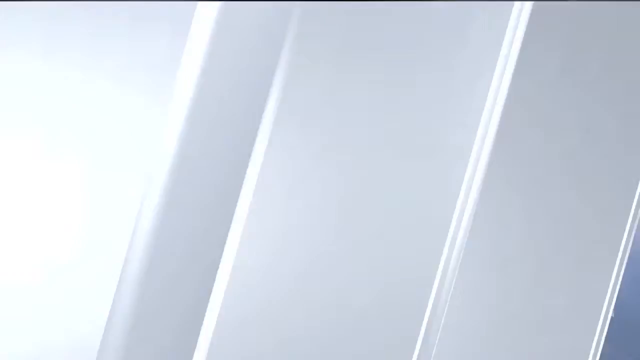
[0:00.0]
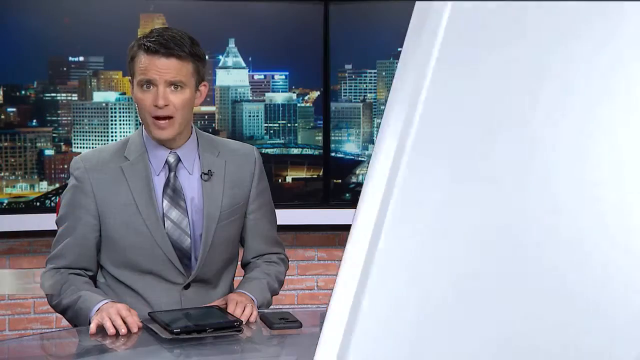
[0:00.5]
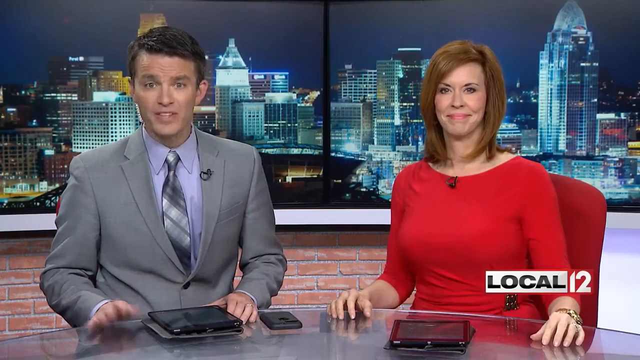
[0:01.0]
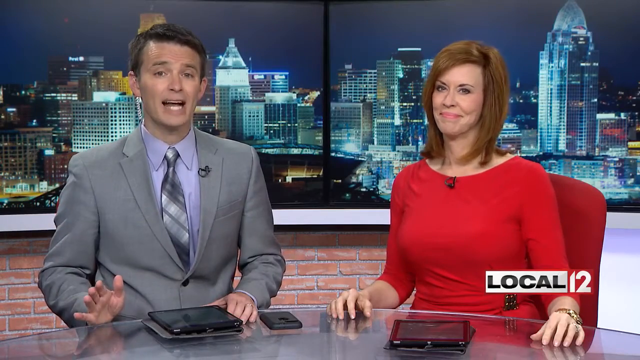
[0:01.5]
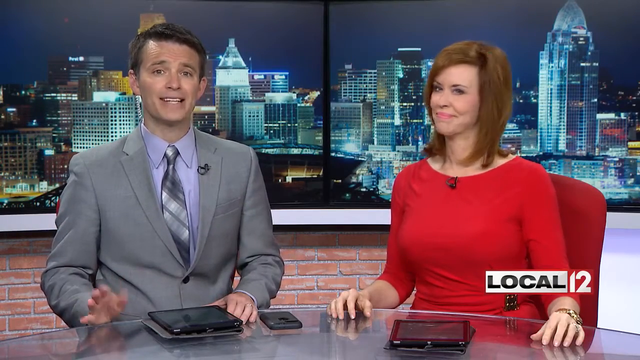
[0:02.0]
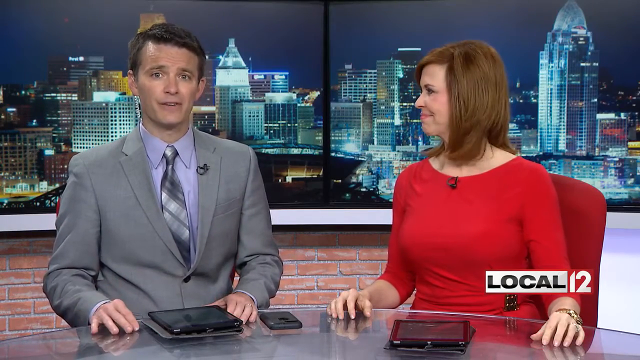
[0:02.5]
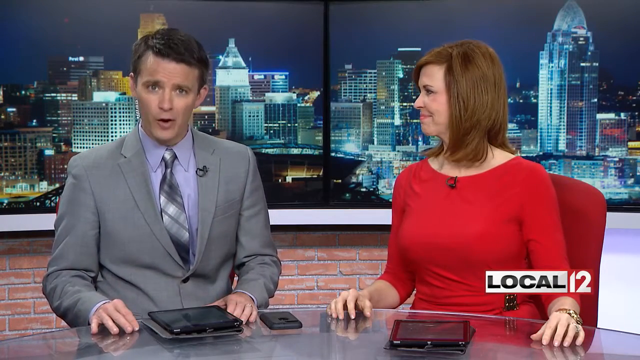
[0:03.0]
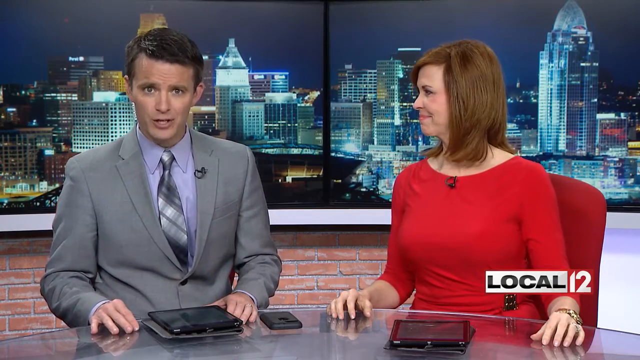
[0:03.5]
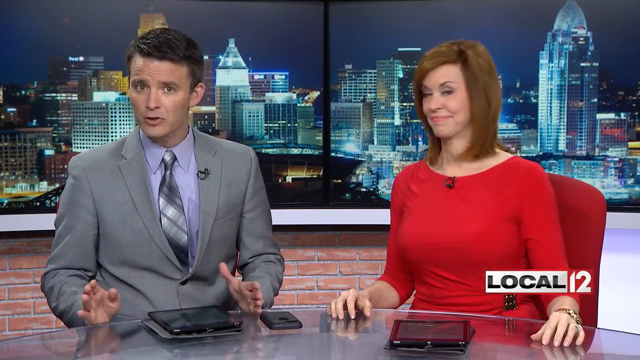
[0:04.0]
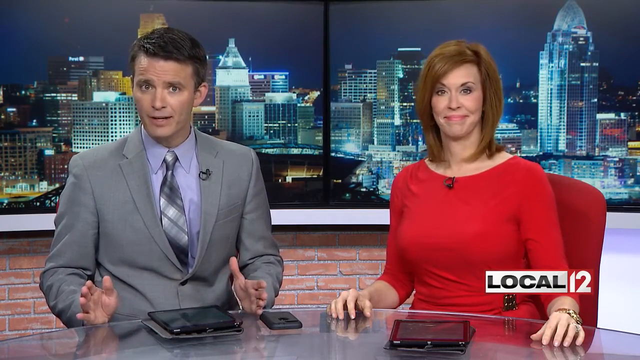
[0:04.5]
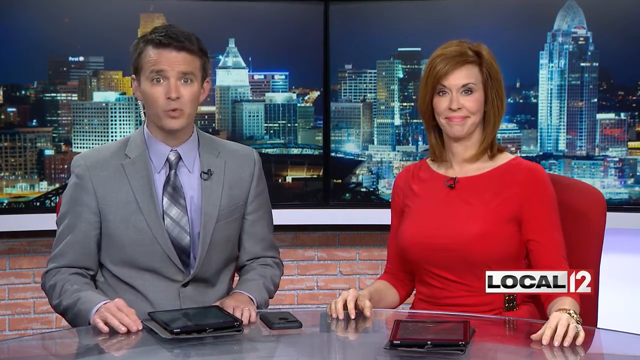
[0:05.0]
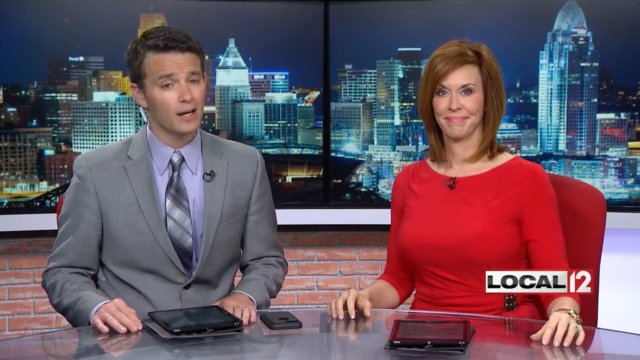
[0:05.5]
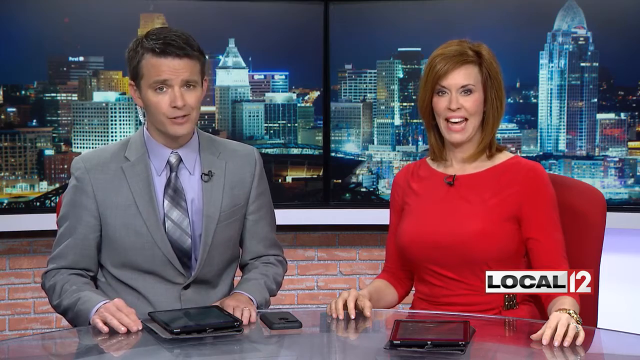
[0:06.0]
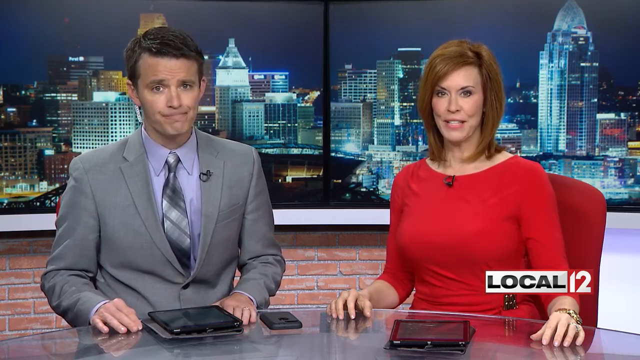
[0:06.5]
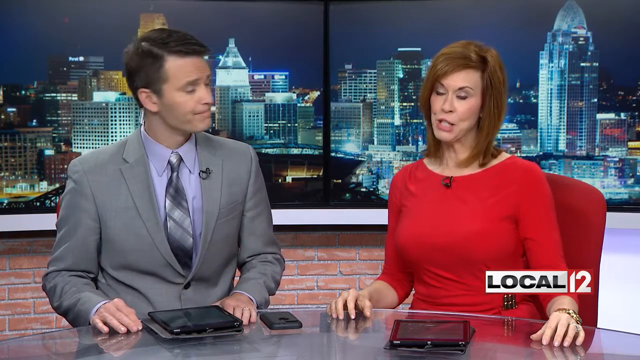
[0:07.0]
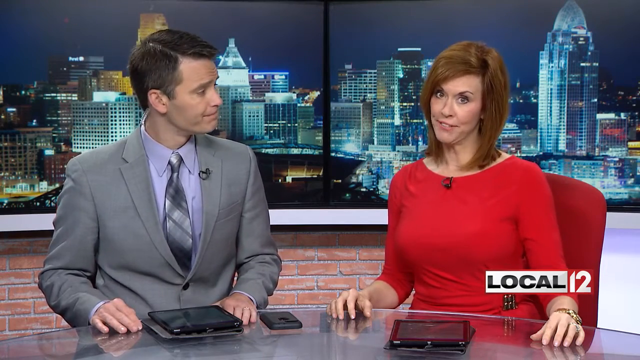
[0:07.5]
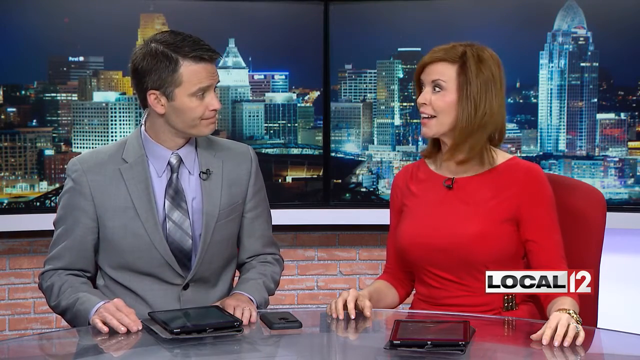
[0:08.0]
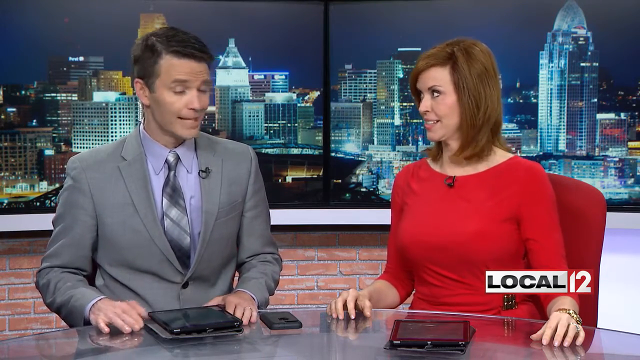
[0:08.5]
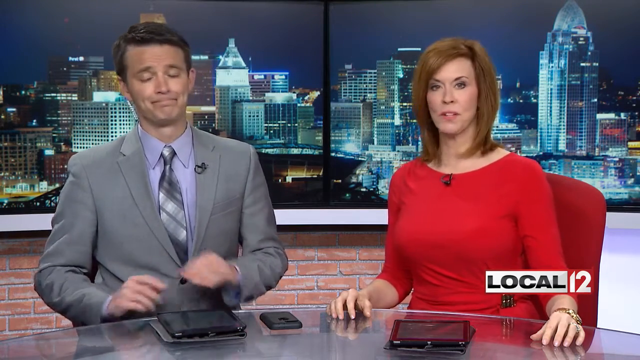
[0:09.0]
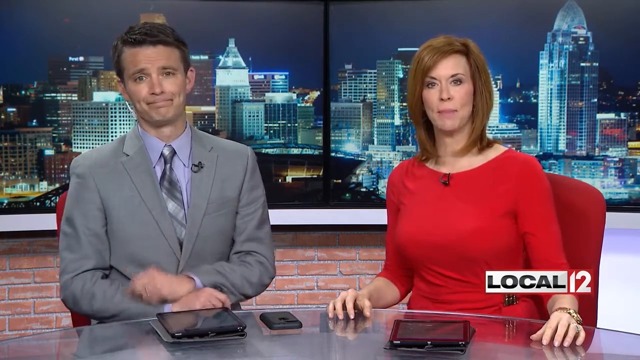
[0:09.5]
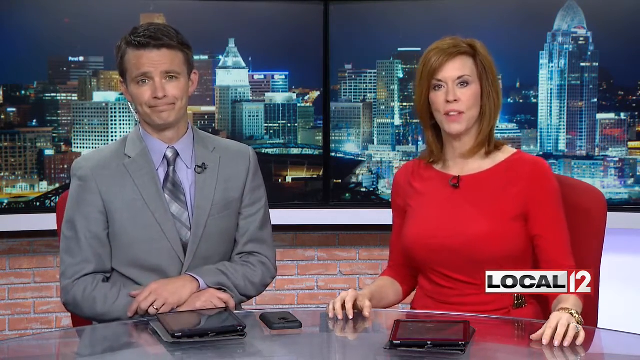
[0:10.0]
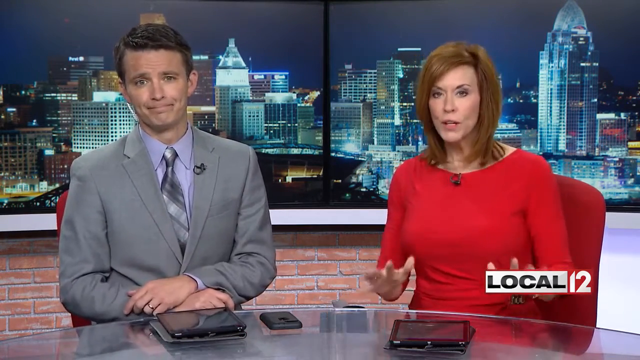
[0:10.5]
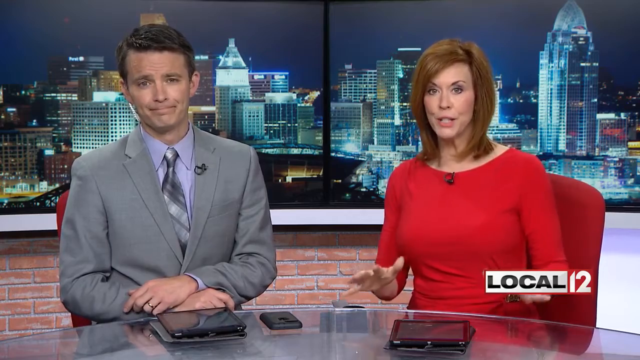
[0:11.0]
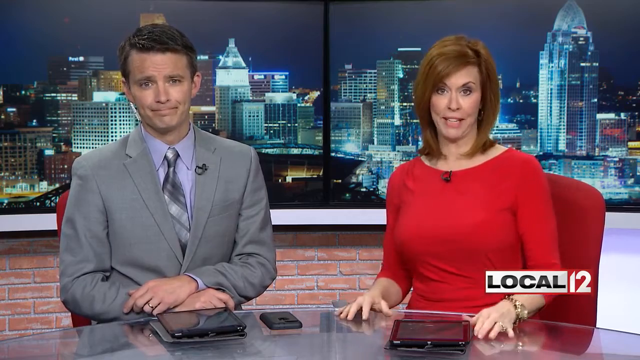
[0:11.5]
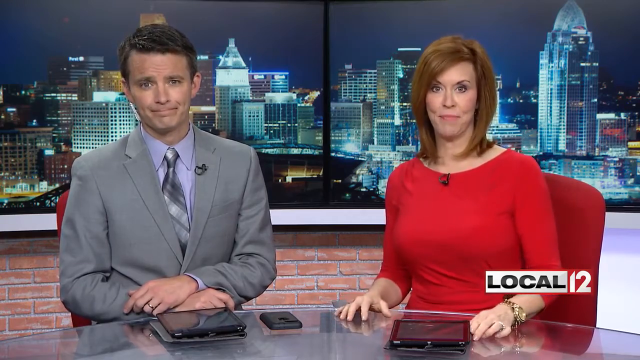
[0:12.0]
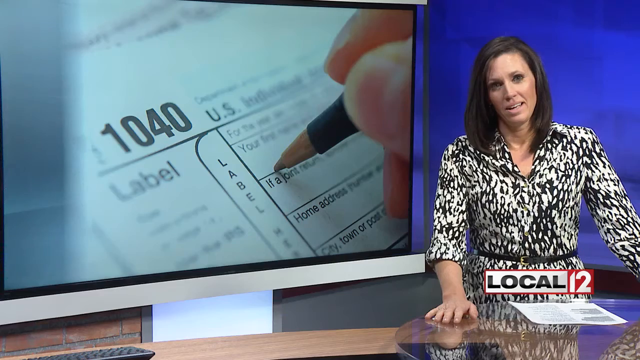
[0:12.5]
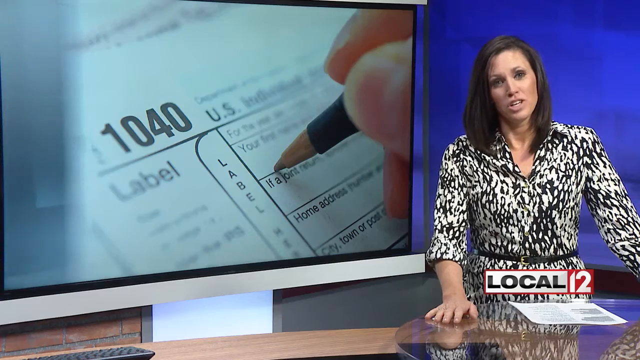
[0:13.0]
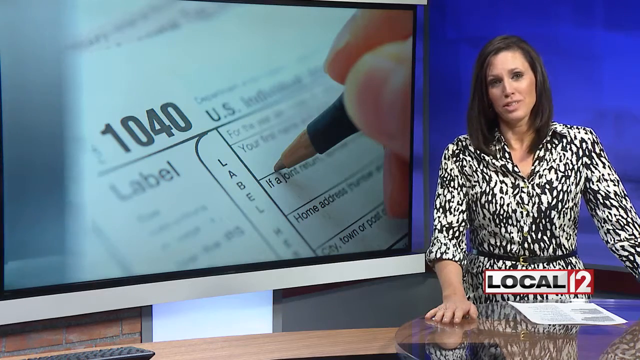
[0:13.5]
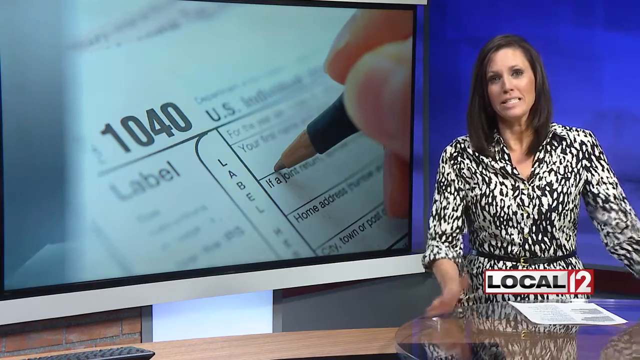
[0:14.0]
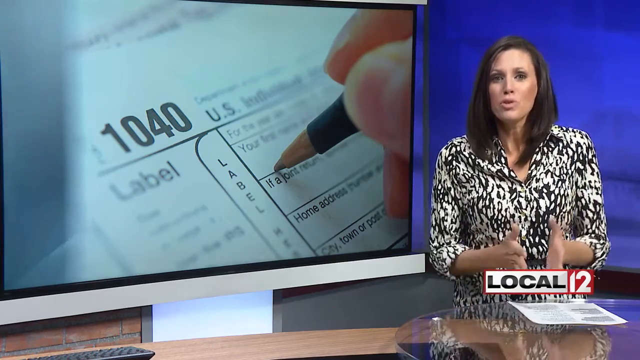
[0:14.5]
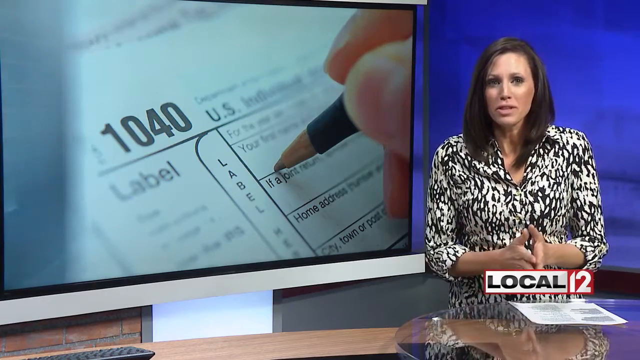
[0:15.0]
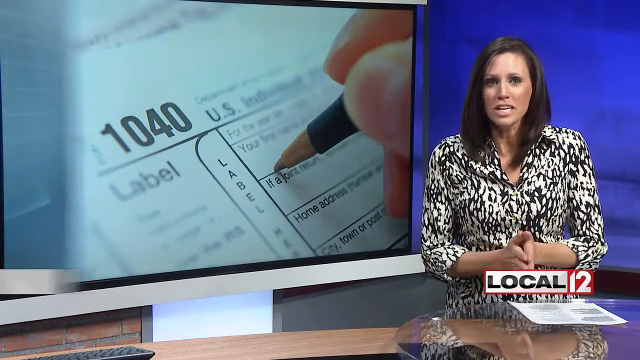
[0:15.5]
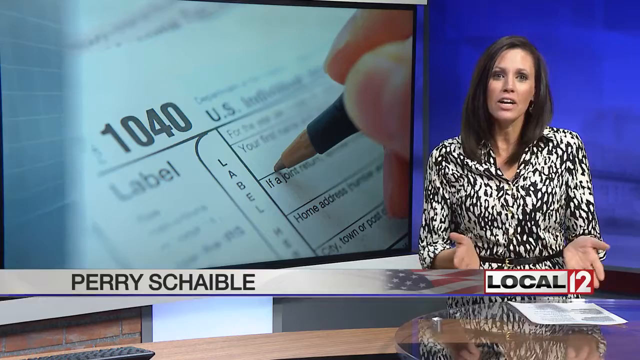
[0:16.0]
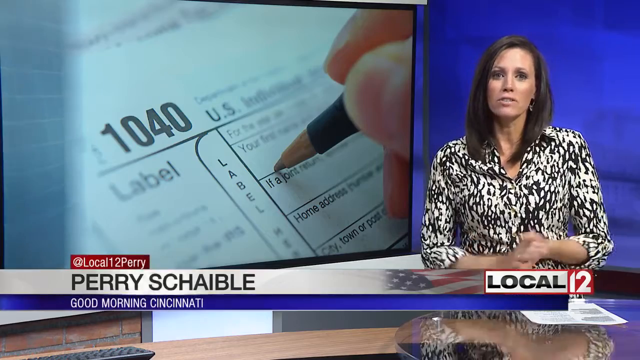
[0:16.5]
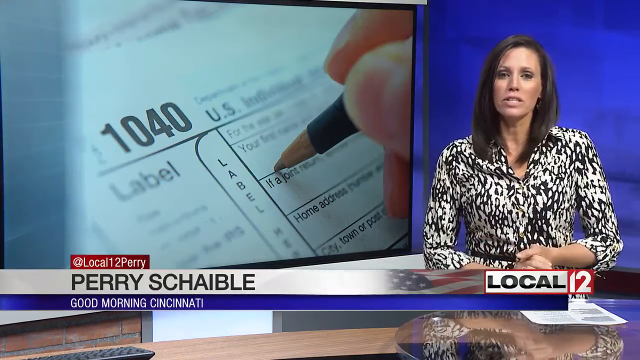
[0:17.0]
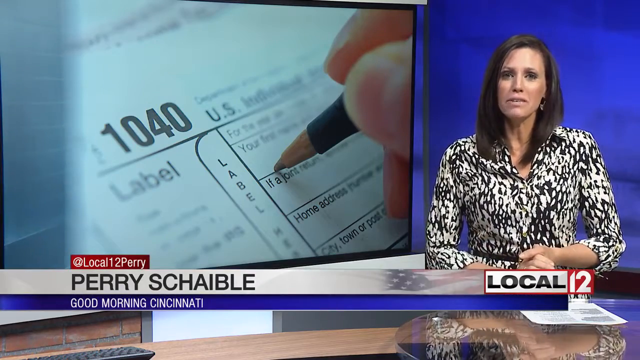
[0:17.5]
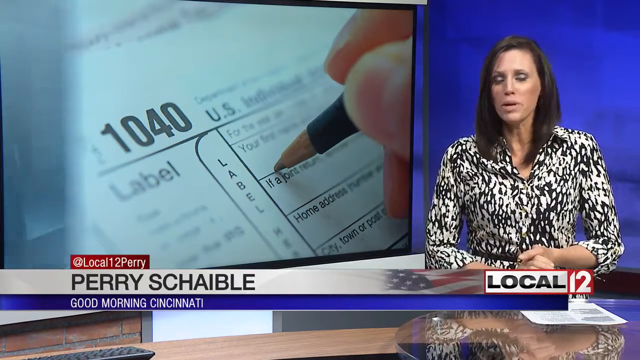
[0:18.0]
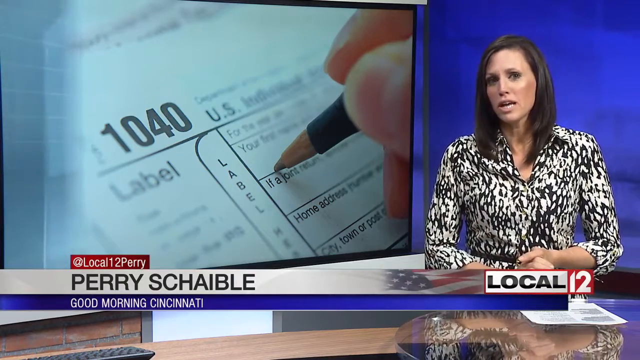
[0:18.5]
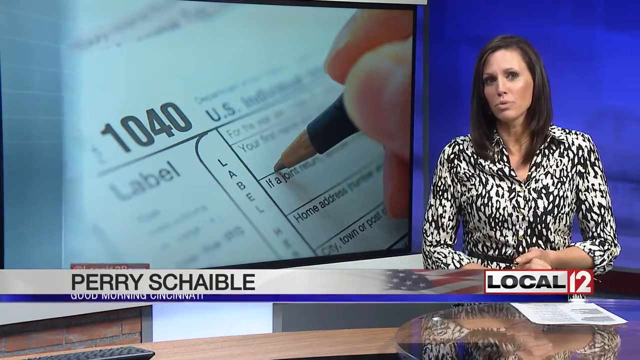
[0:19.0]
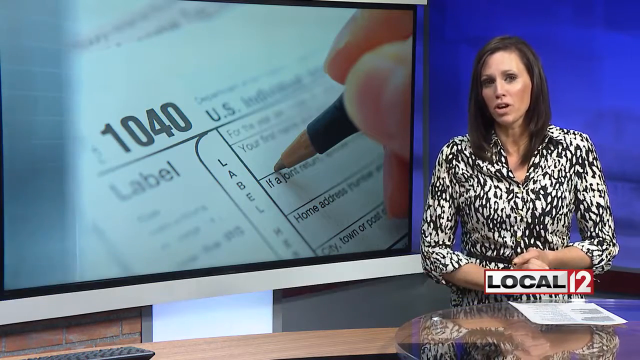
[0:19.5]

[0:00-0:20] A newscast opens with the channel name "Local 12" in the lower right corner. A male and a female sit at a round table in red chairs. Behind them is a computer screen showing the city and the downtown skyscrapers. The male on the left wears a gray suit, a light blue shirt and a striped gray tie, with a microphone on his lapel. The female on the right wears a red dress with a microphone attached to the top hem along the neck. The two take turns talking to open the segment, then pass it on to another person who continues the story. This woman has black hair and wears a black and white scattered-pattern dress with a belt around the waist. She is on the right side of the screen with a piece of paper in front of her. On the left is a monitor showing a 1040 form and a pen getting ready to write in the space where the first name goes. As the female reporter talks, her name, "Perry Schaible", appears, and below it is the text "good morning, Cincinnati".